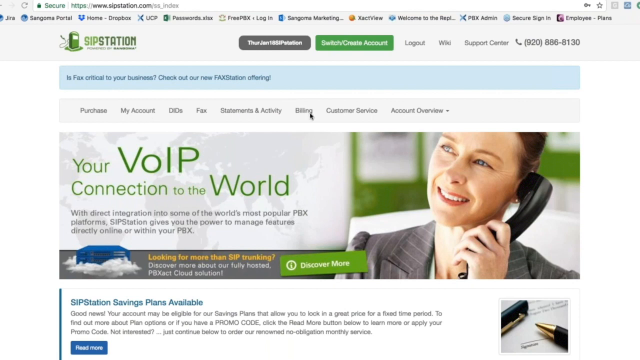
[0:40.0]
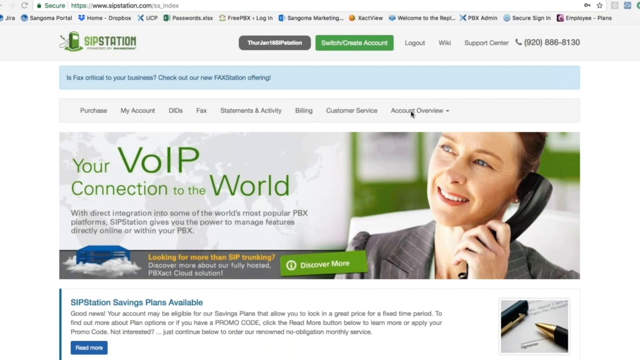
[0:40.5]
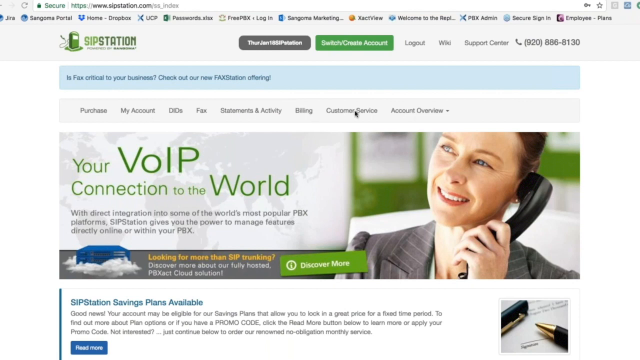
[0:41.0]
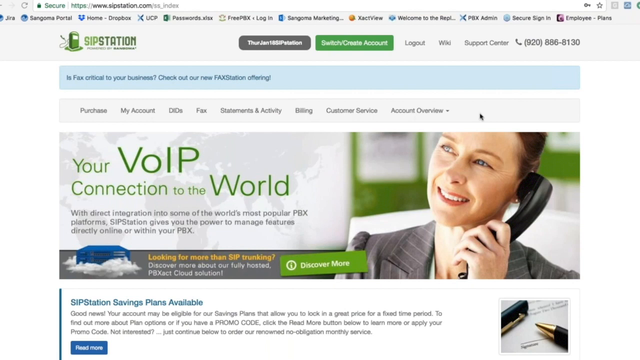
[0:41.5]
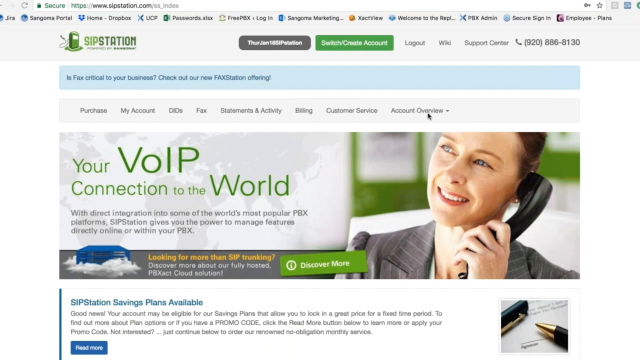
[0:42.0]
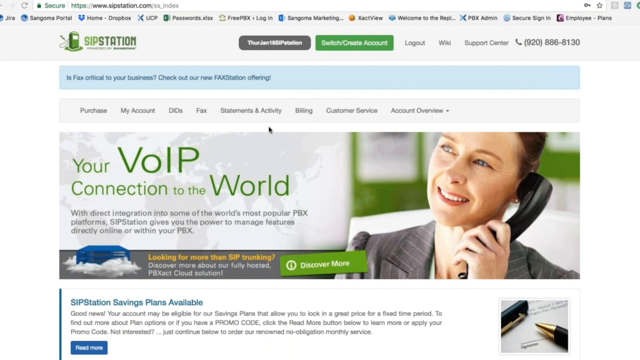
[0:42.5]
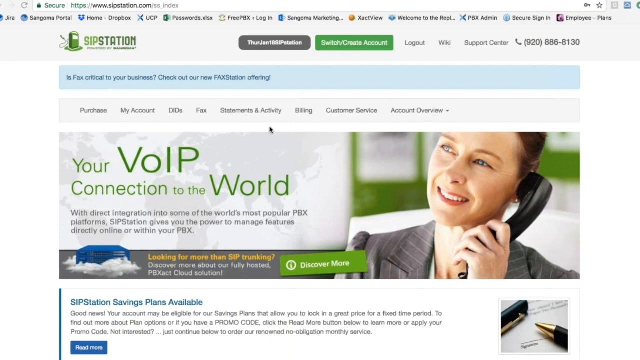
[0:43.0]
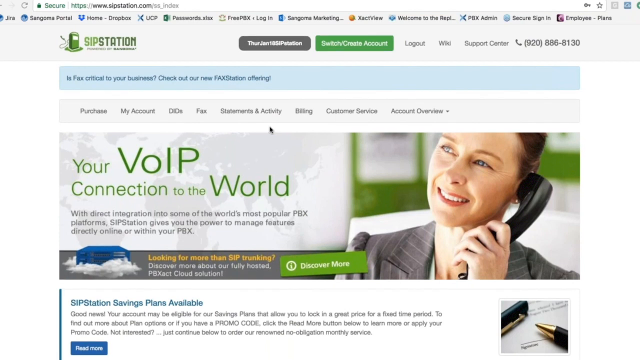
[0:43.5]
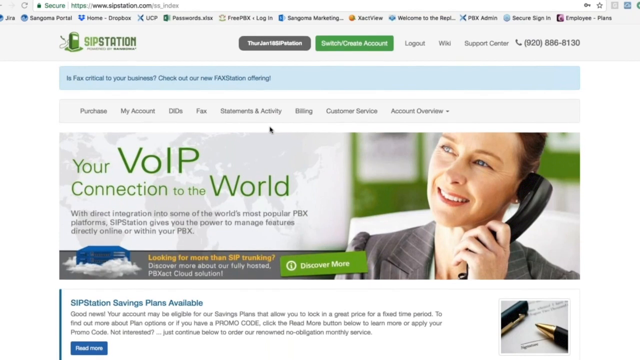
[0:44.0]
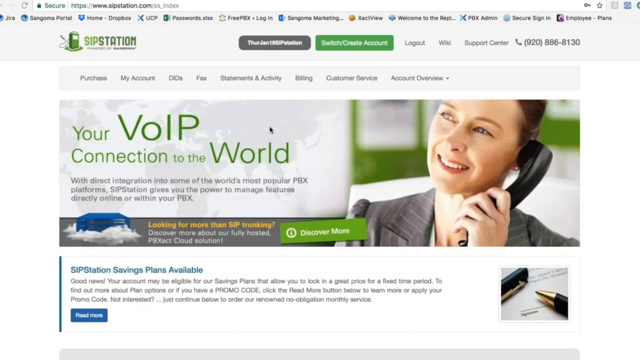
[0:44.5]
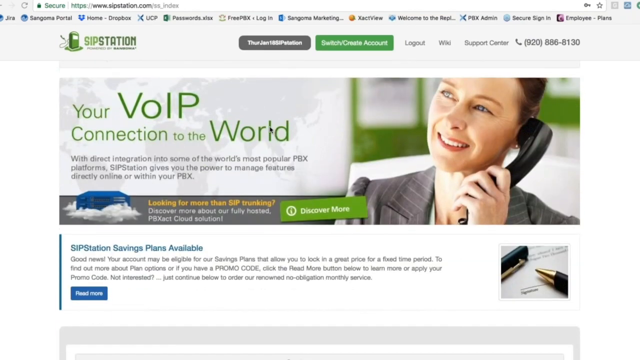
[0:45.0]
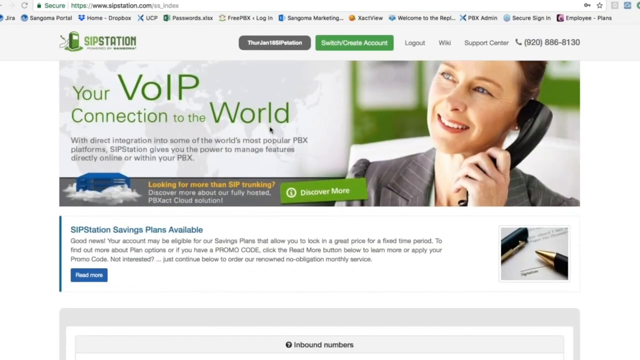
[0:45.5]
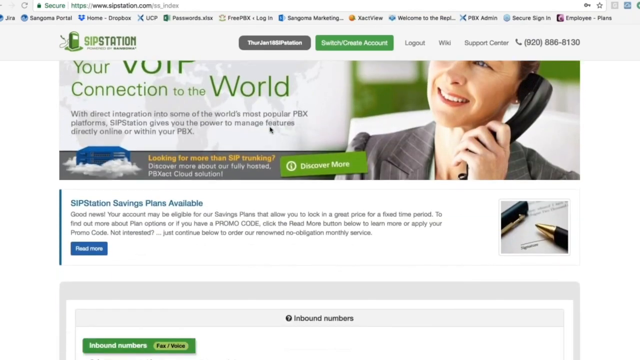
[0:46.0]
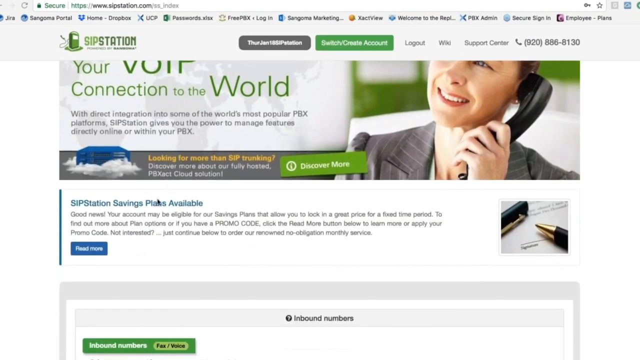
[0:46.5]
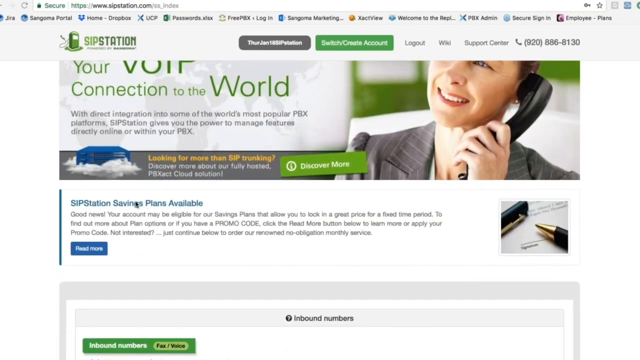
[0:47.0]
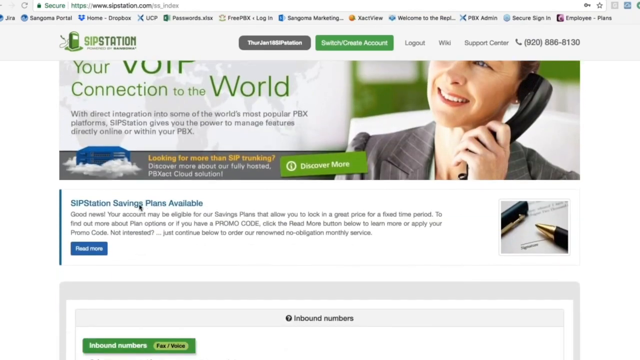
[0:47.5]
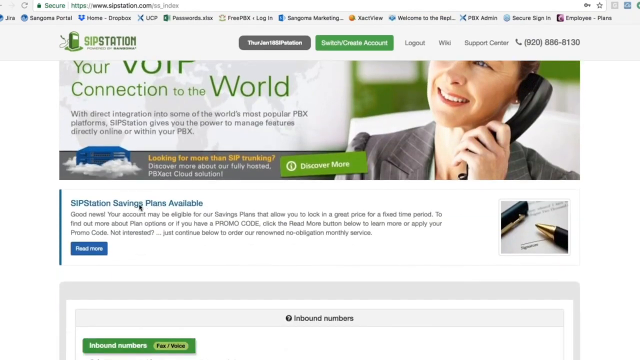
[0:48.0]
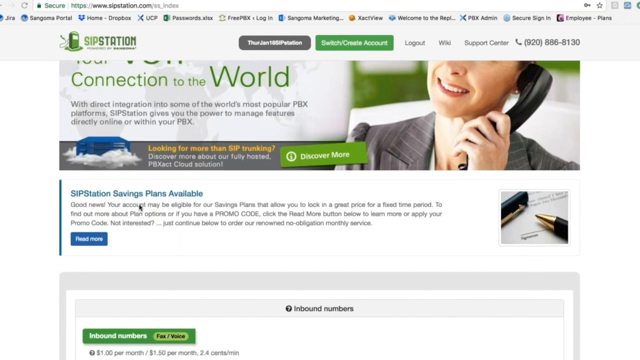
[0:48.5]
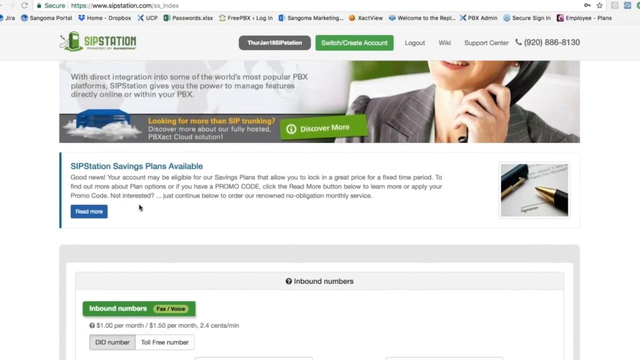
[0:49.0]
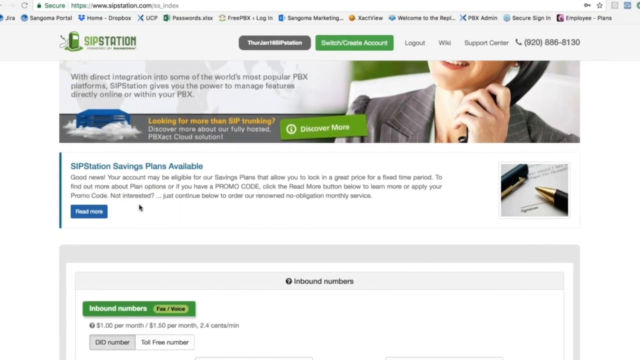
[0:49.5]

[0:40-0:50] A web page says "Sipstation" and "your VOIP connection to the world," with a businesswoman wearing a suit holding a phone to her head. A cursor goes back and forth across the toolbar on the web page, then the page is pulled down a little and "Sipstation savings plans available" is highlighted. The page then scrolls a little further down, revealing another section about inbound numbers.